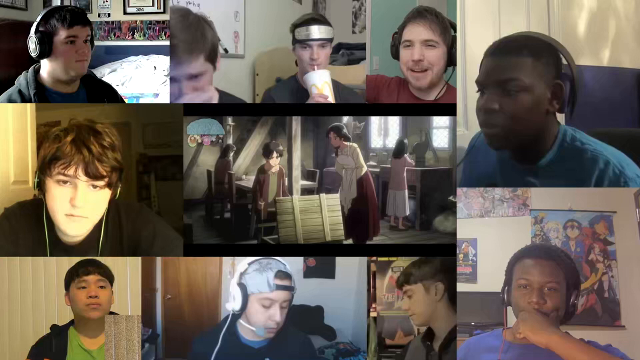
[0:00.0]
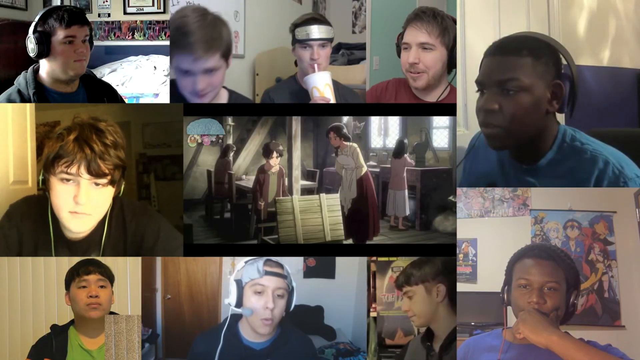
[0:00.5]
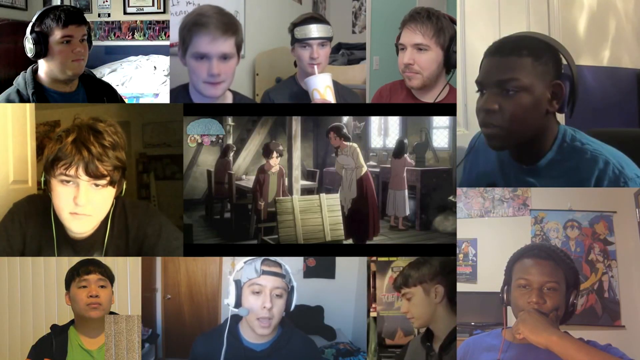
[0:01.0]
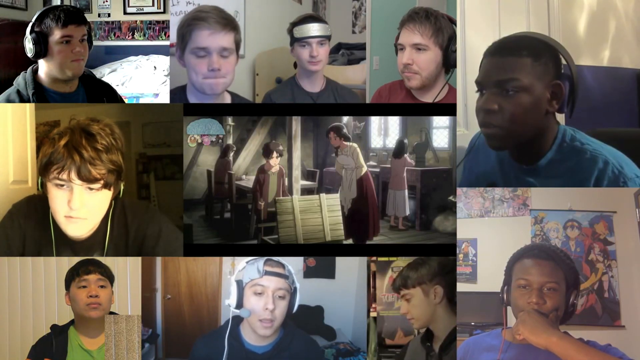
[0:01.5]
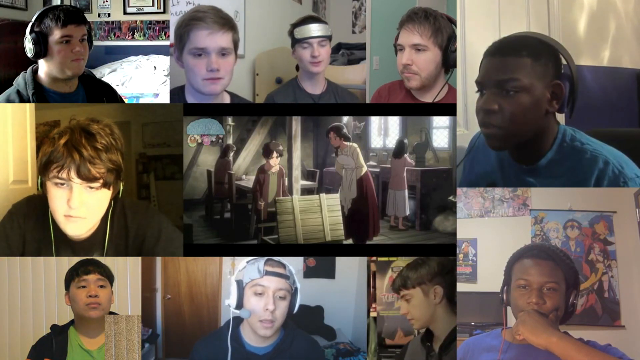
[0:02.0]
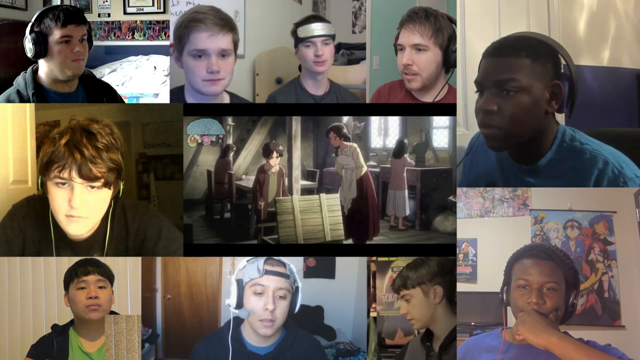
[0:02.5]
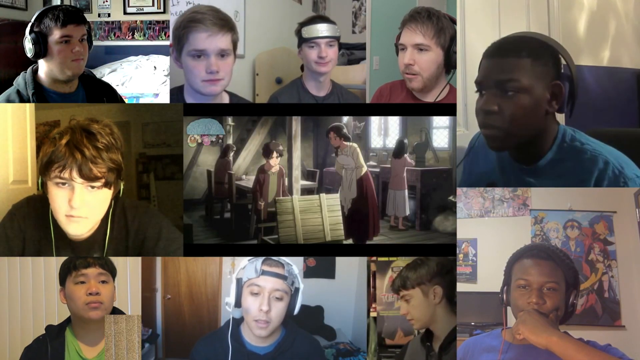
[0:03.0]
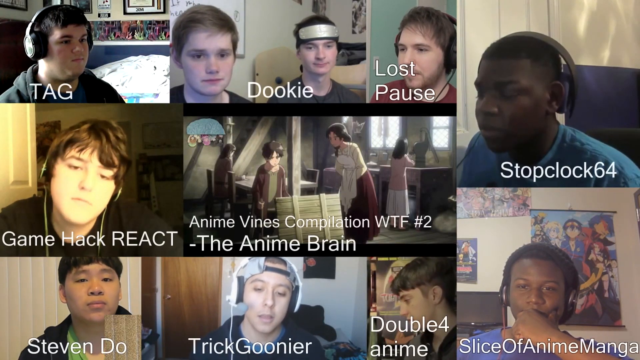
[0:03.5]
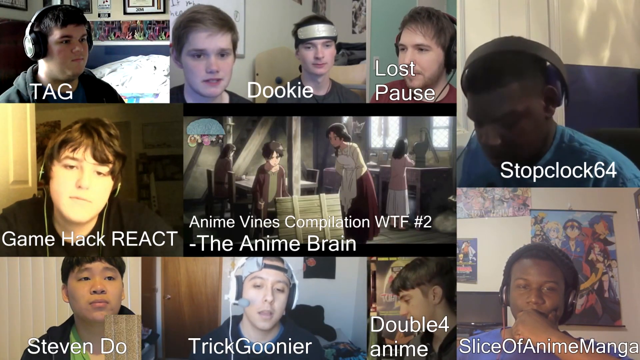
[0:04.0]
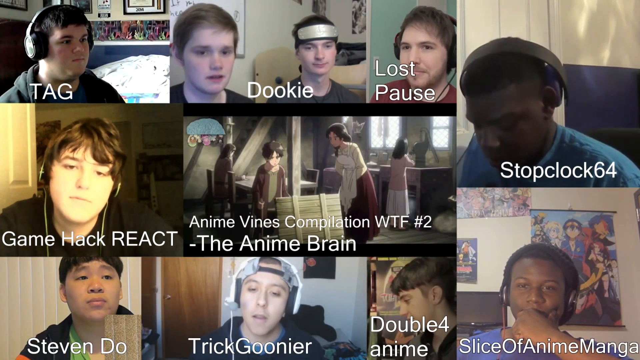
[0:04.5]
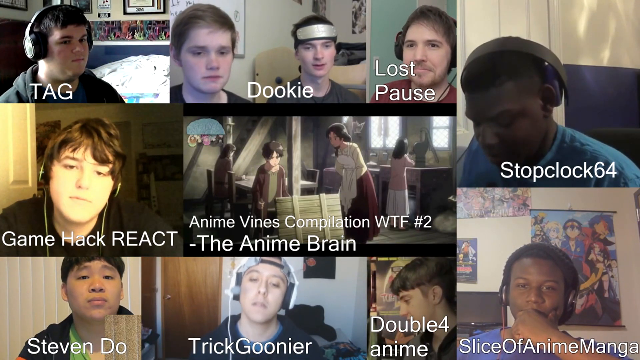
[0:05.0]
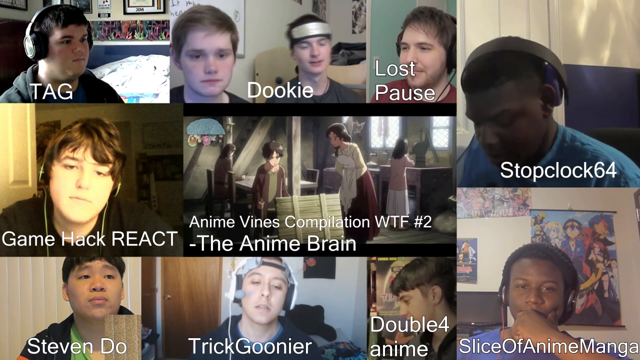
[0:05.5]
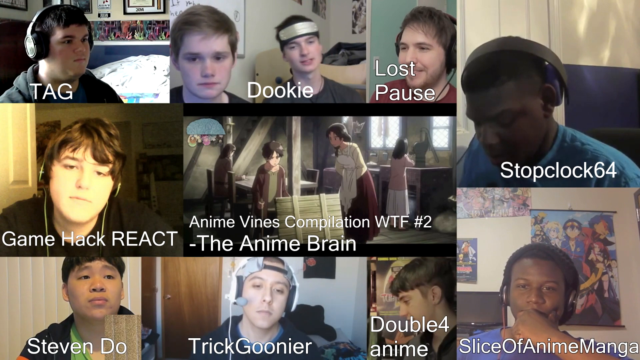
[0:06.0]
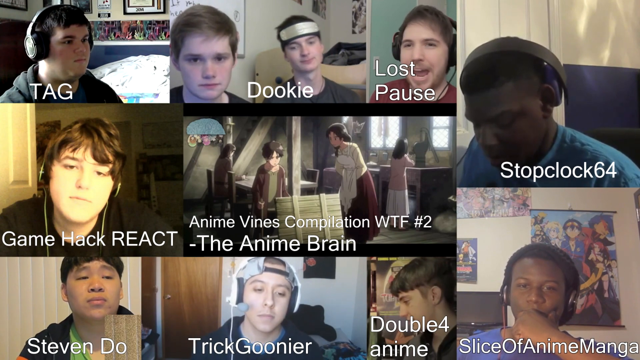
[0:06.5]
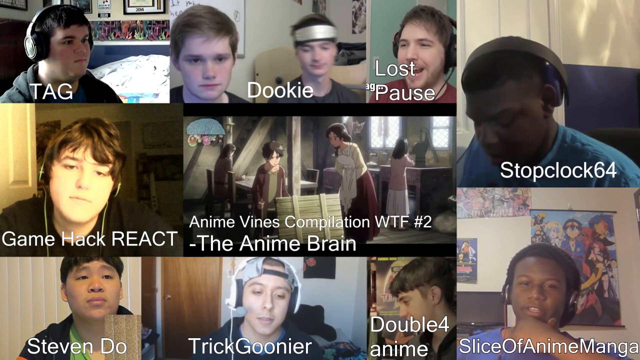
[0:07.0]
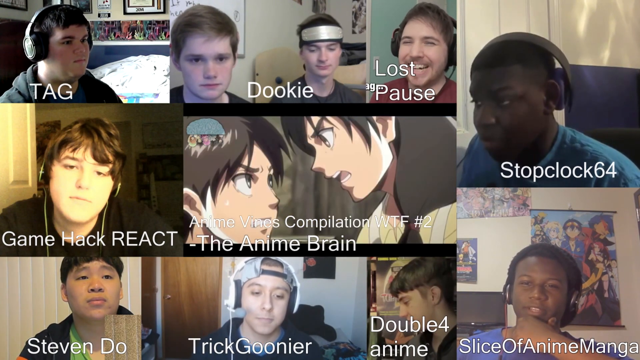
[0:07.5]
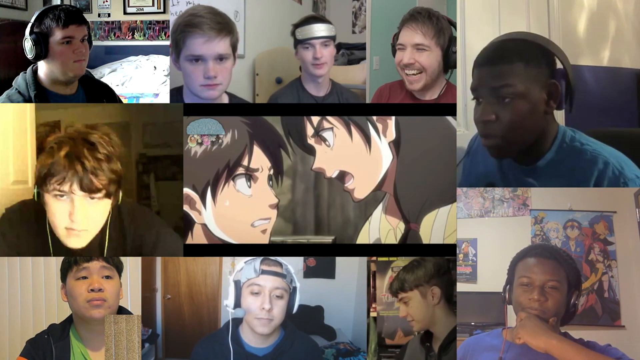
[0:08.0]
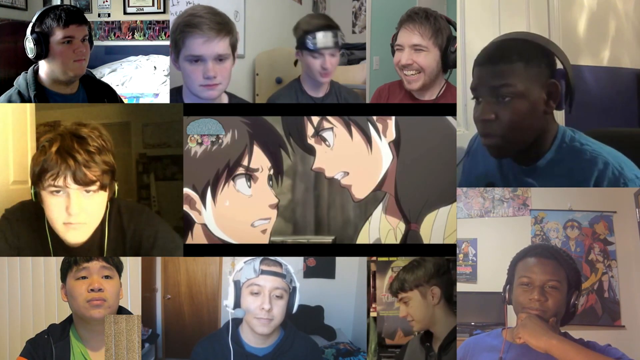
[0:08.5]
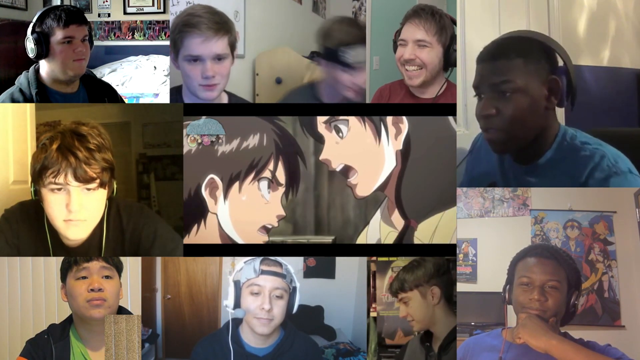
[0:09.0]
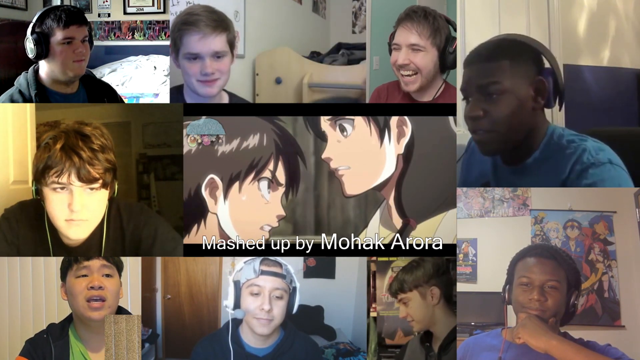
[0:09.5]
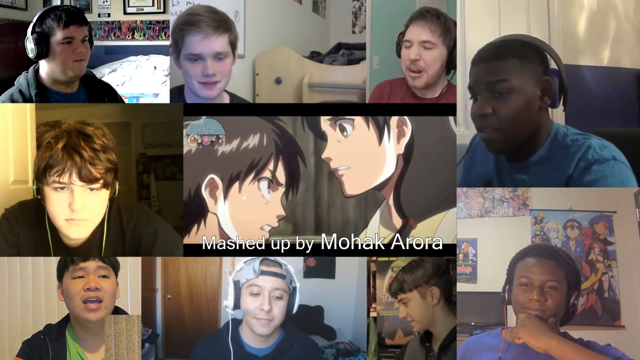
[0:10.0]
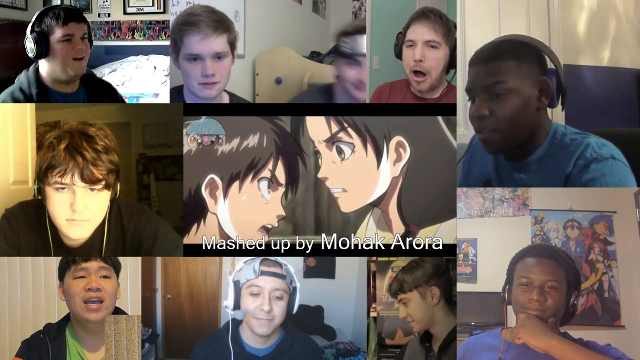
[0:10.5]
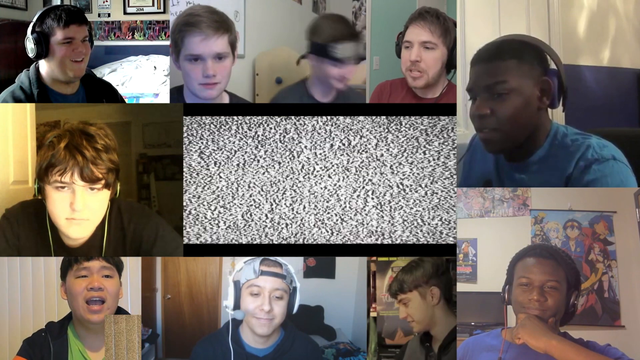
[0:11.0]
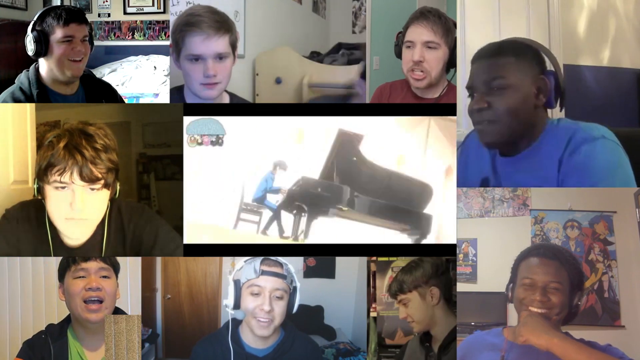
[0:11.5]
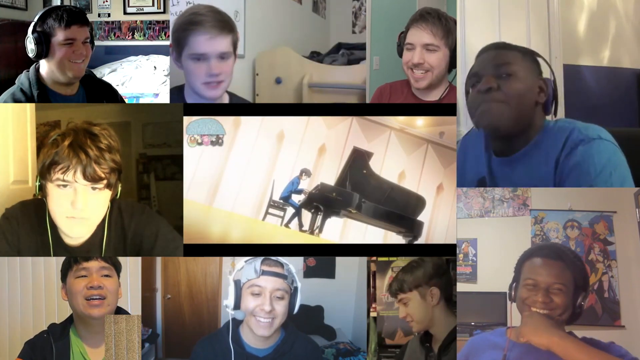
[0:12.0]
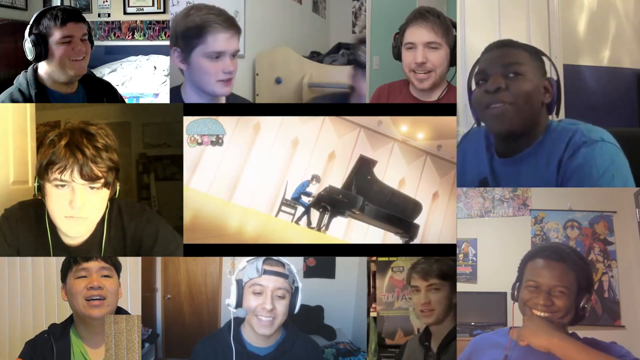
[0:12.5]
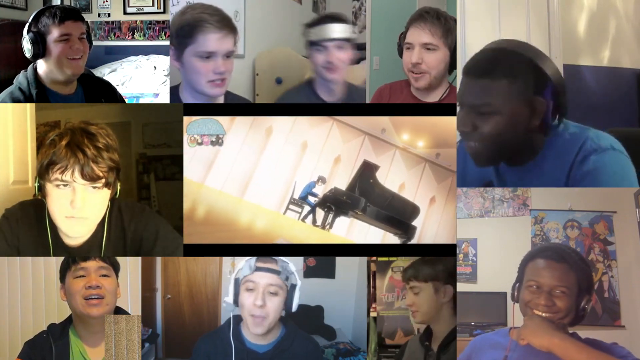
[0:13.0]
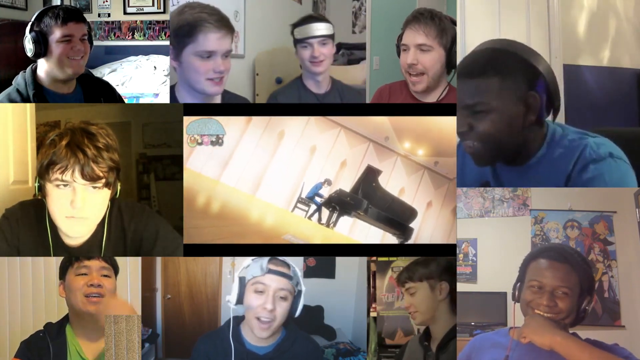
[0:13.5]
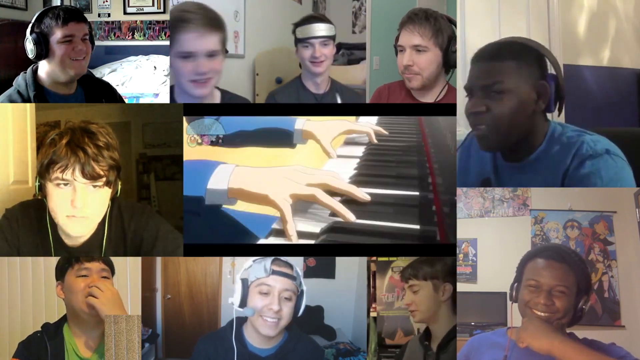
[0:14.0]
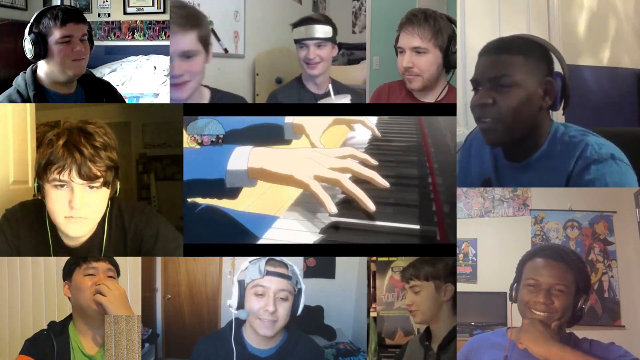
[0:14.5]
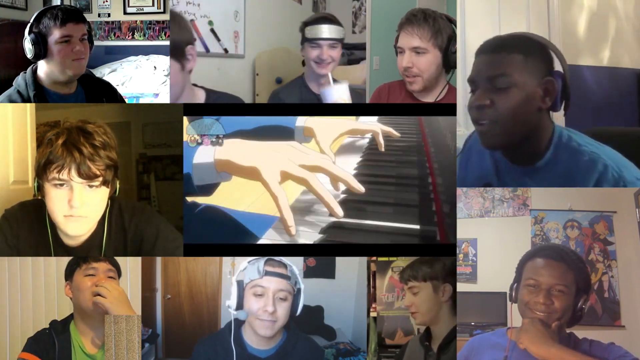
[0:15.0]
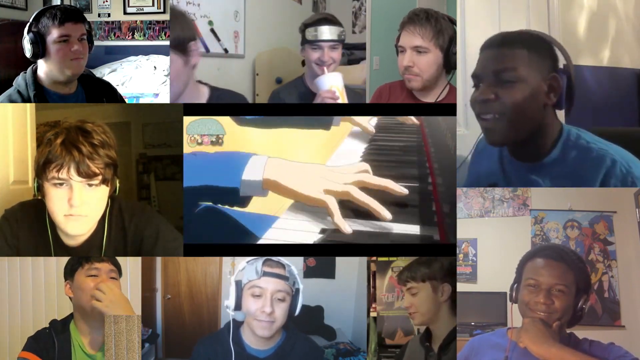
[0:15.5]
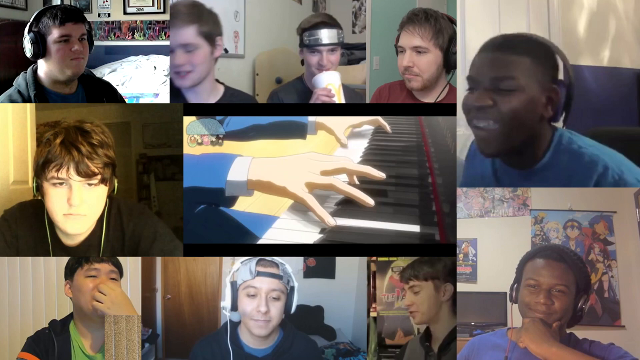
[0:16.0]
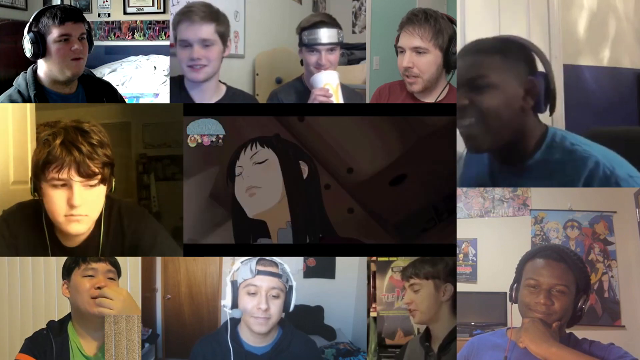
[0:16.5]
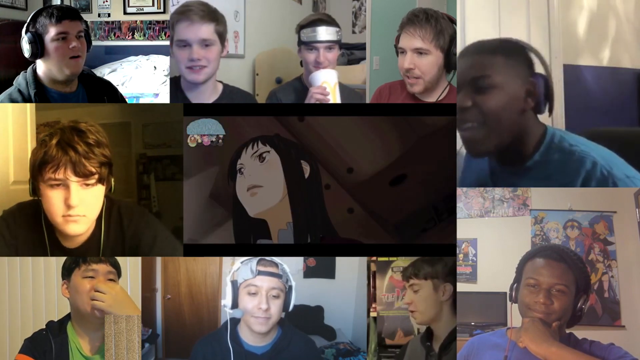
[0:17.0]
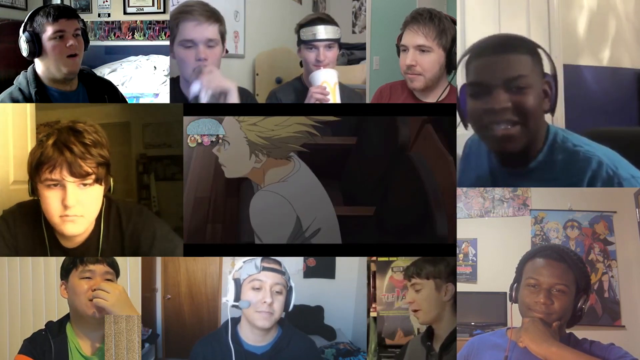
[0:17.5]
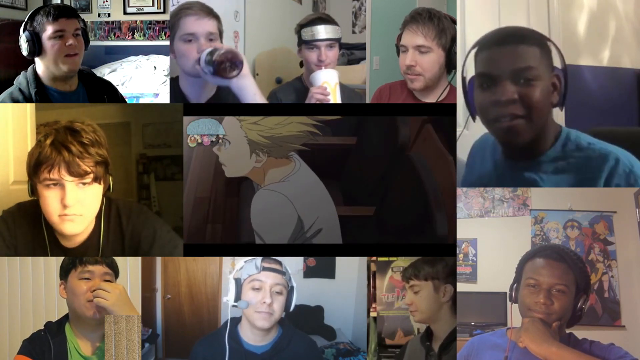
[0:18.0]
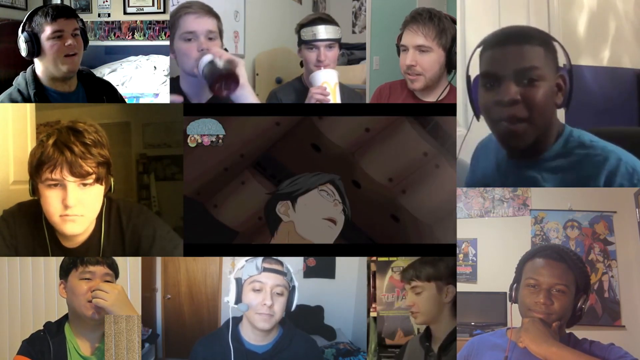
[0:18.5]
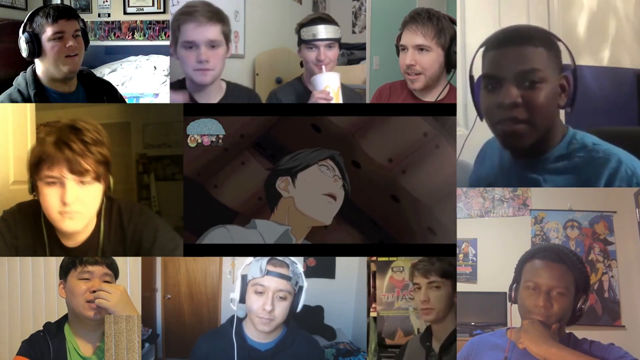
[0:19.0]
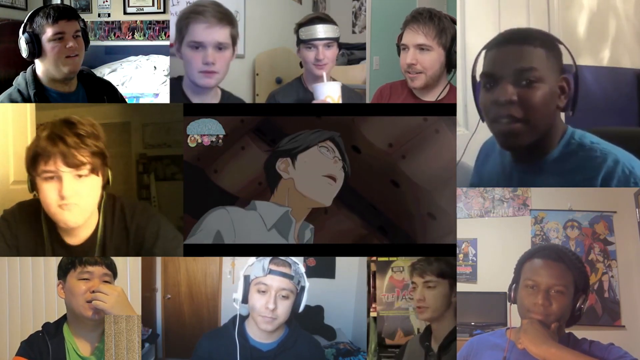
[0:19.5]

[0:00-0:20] A collage of a number of people appears on the screen; it kind of looks like they are all on webcams or live streaming. Most of them have headphones on, and an animated cartoon is in the center. They all kind of just stare and watch. Text appears on the screen, including some in the center, and some of the guys smile and talk; it is kind of like a reaction video. A scene shows a boy at a piano, playing it, with an up-close view of him doing so. Some of the guys on the right act goofy. A clip of a man wearing glasses appears in the center, and the boy on the left starts jamming his head like he is listening to music.